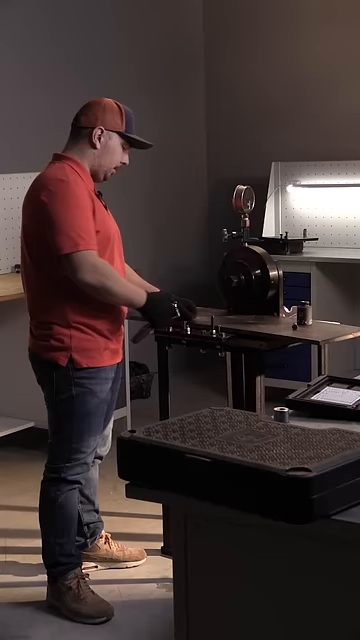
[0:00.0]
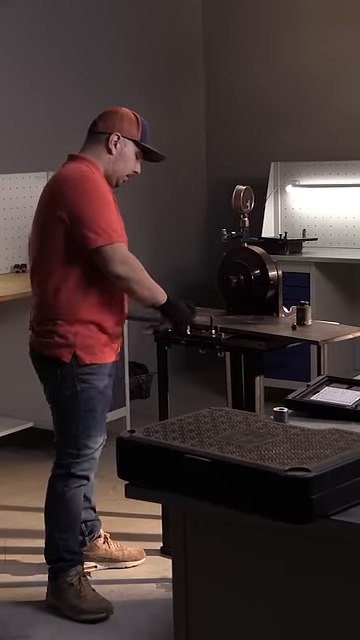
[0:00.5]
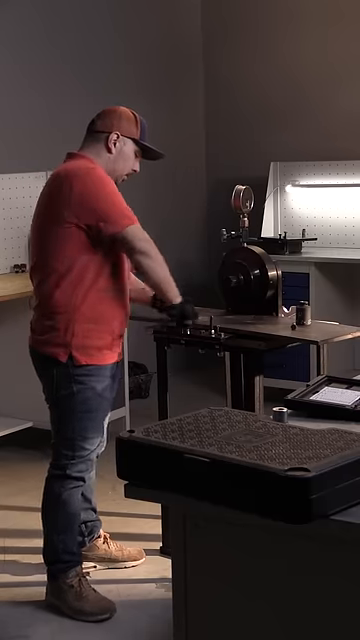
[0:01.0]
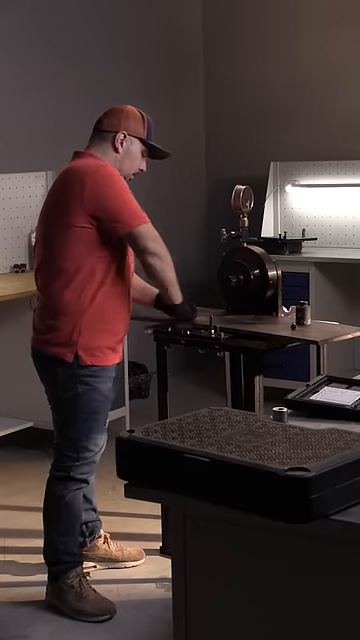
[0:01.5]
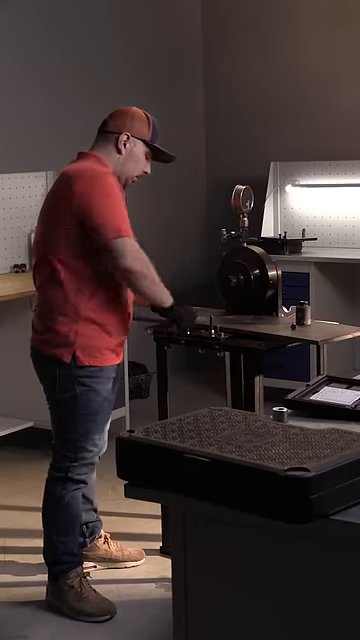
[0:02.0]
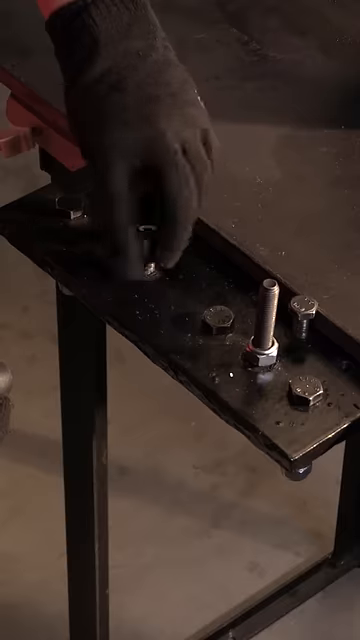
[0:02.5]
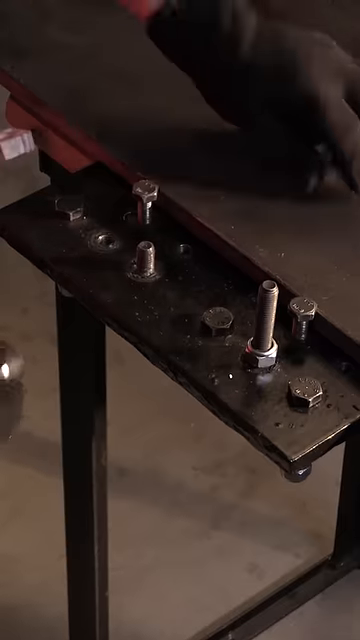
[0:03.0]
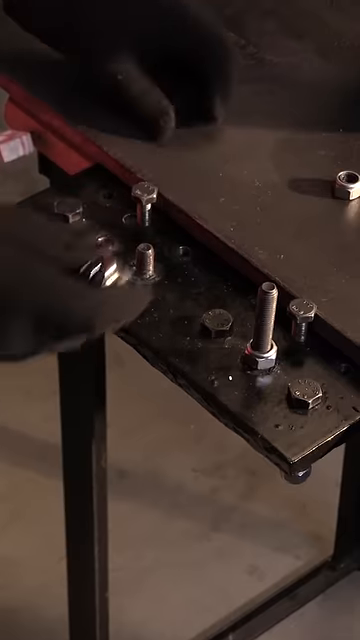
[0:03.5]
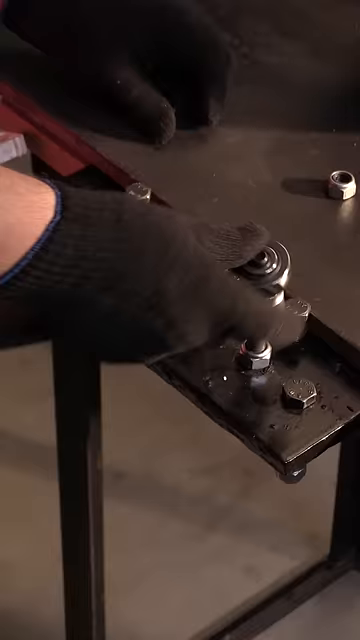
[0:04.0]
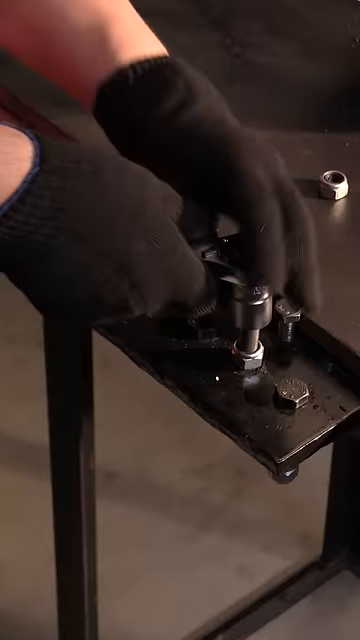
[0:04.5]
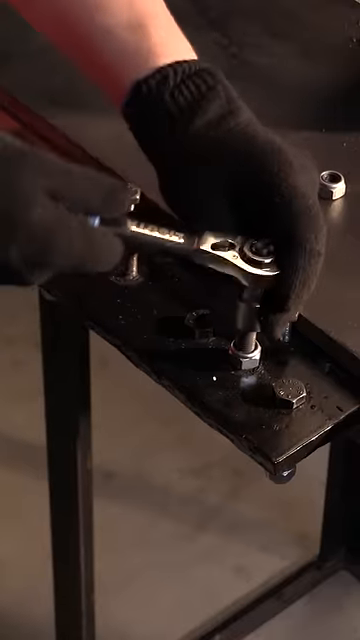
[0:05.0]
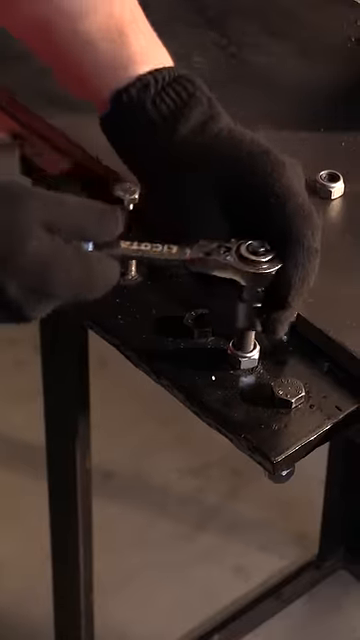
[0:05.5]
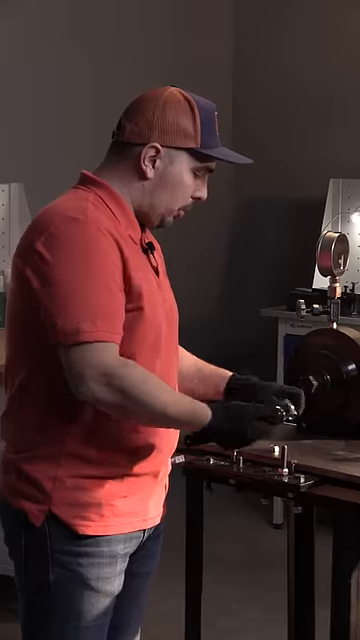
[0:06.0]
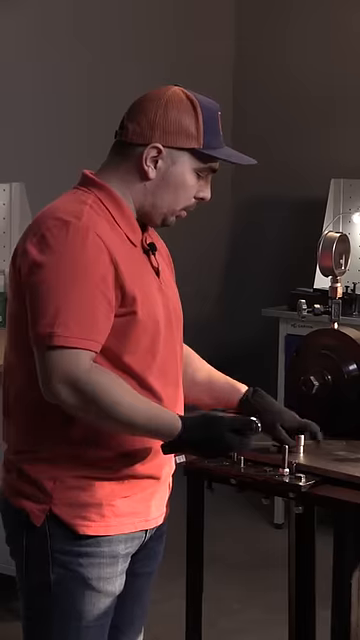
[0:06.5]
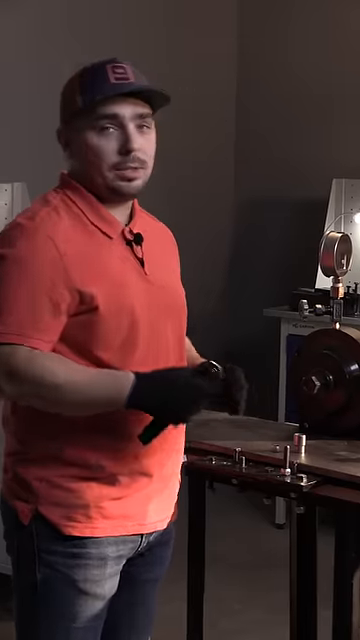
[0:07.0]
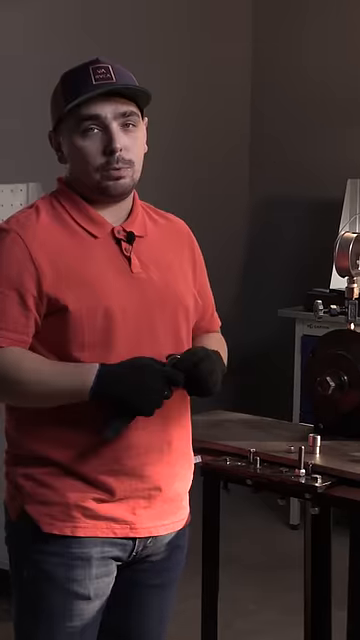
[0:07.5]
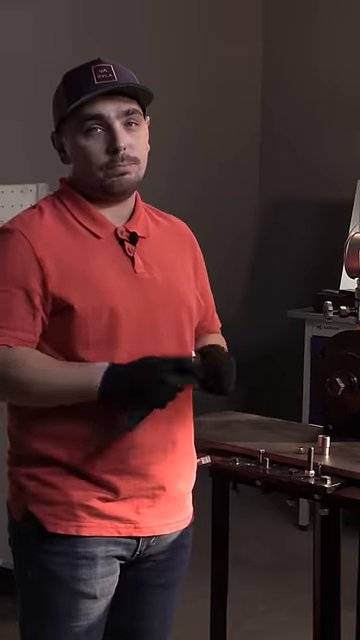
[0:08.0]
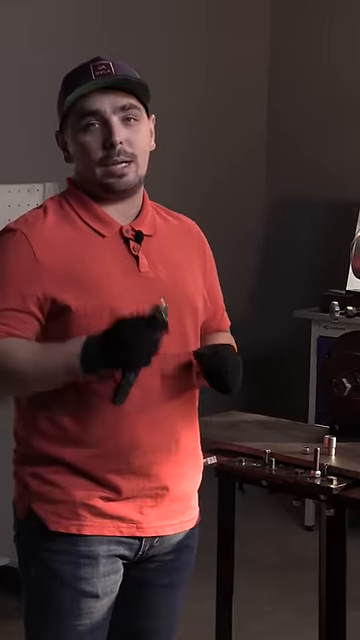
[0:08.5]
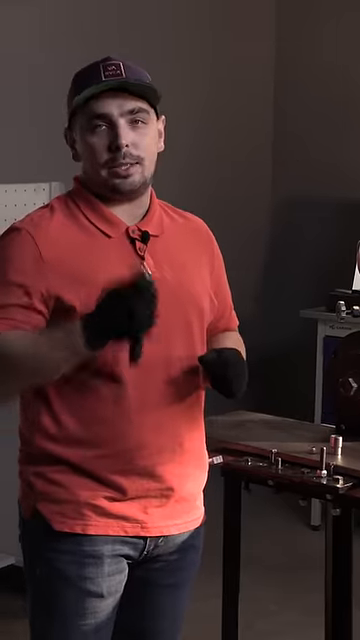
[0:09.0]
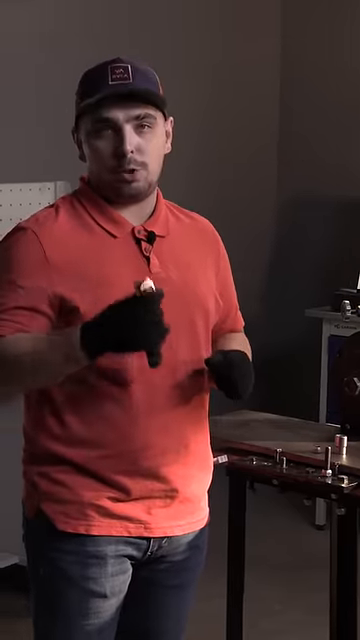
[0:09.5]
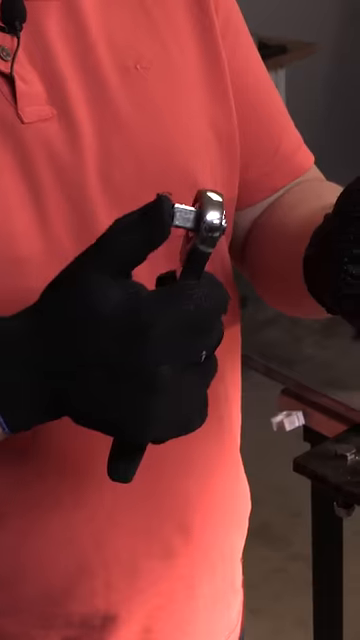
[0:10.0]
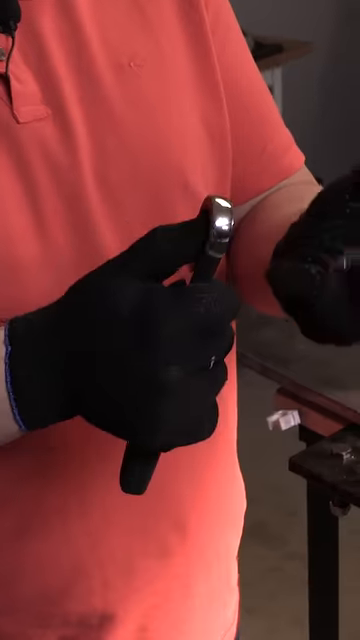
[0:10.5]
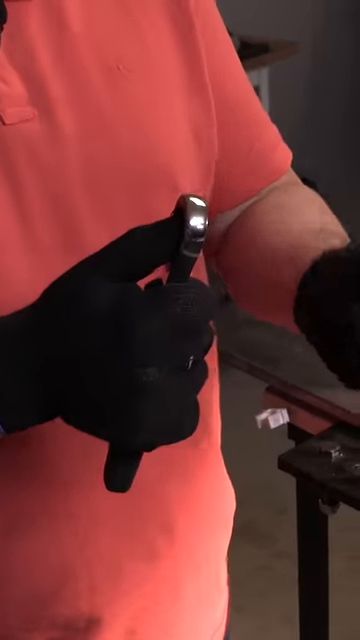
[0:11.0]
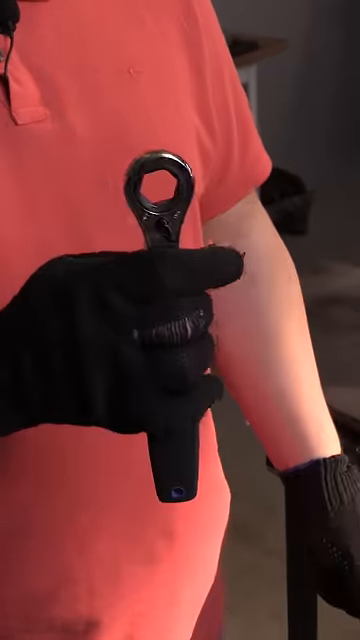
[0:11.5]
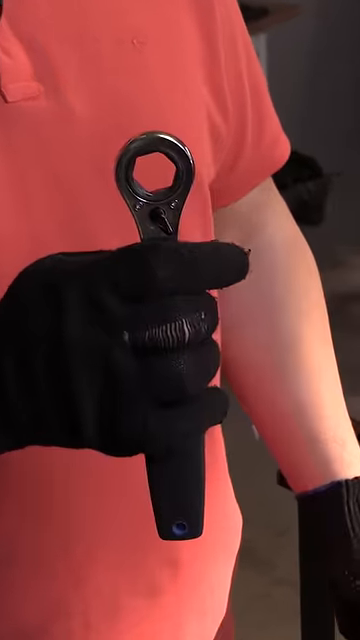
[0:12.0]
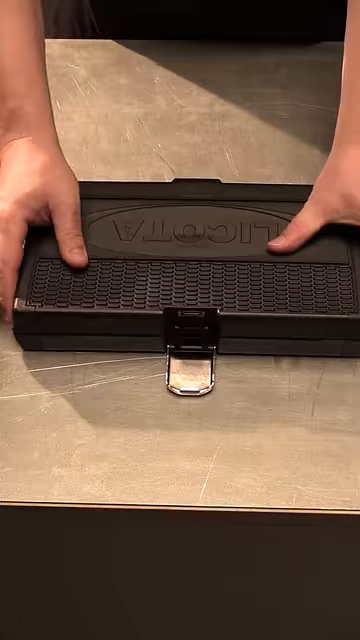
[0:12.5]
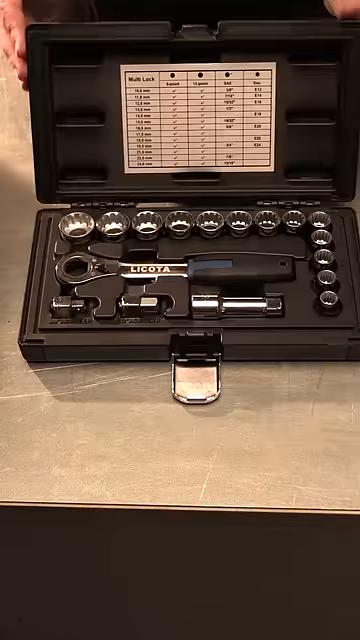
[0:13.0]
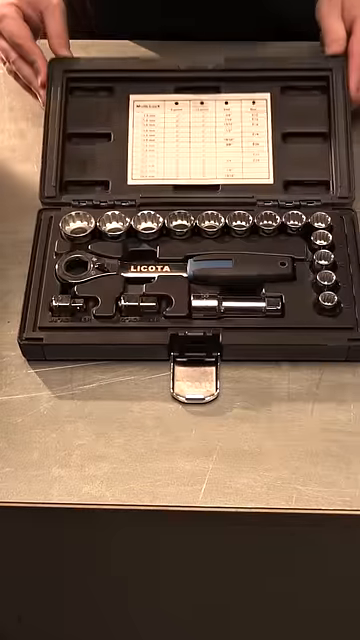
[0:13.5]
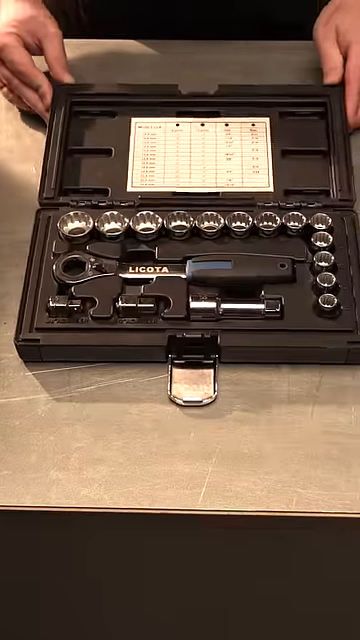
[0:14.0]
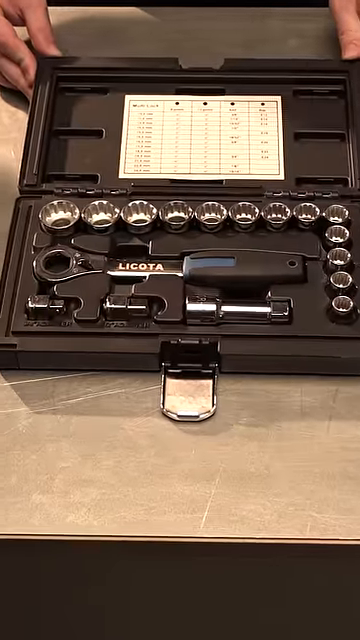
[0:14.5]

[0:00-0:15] A white man wears a red three-button polo shirt with all buttons fastened and a red collar, blue jeans, a black hat with a square logo, black gloves covering both hands, and brown construction boots. A microphone is attached to the collar of his shirt. He has very thick, bushy eyebrows and either short hair or no hair; the hat makes it impossible to tell. Using a silver ratchet-style tool, he works on a black workbench, unscrewing several socket screws from it and demonstrating how the ratchet works. The video appears to be an advertisement for the ratcheting socket set he is using. After unscrewing one of the sockets, he presses a button on the wrench and the socket pops off with ease.